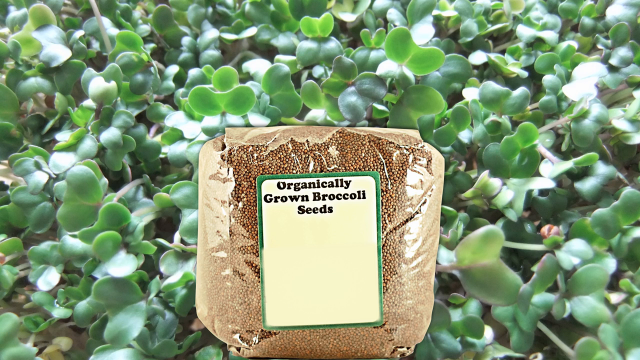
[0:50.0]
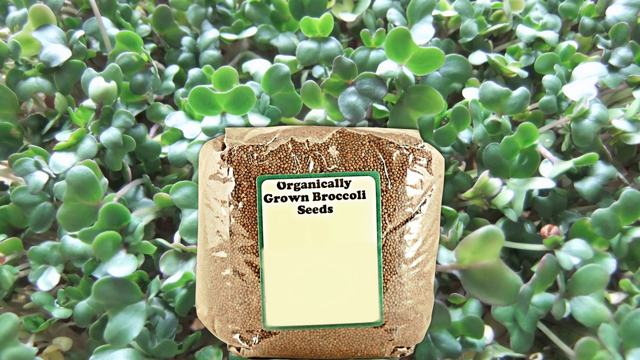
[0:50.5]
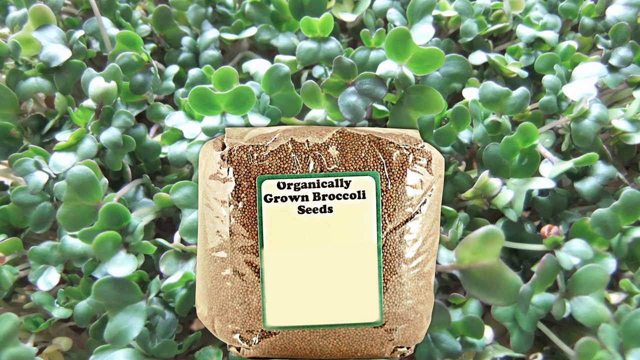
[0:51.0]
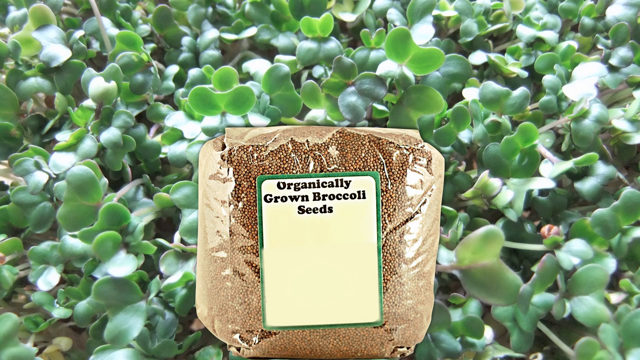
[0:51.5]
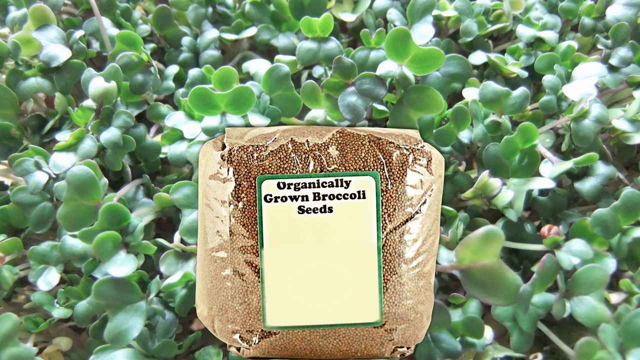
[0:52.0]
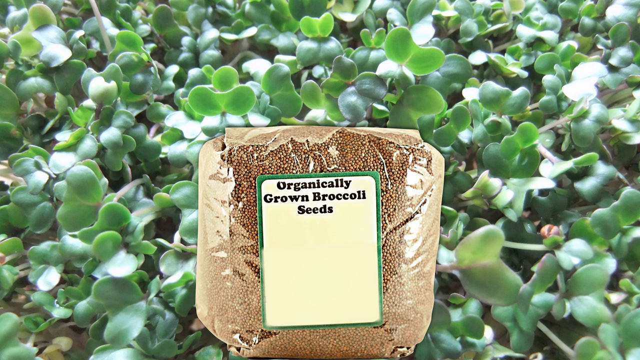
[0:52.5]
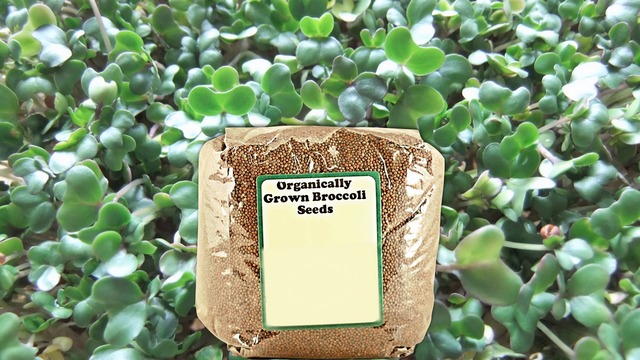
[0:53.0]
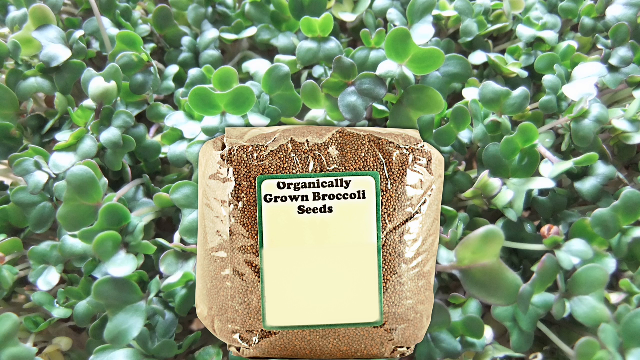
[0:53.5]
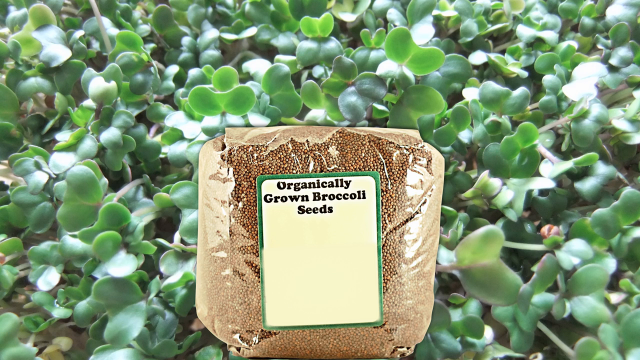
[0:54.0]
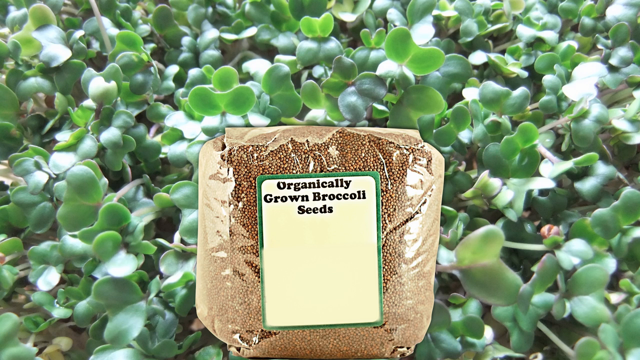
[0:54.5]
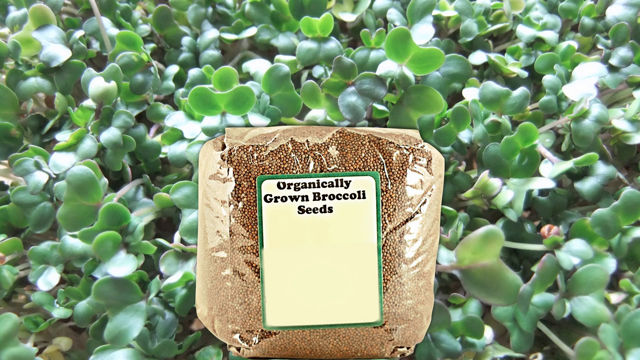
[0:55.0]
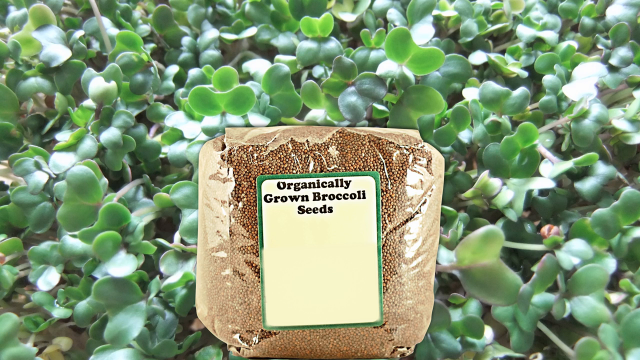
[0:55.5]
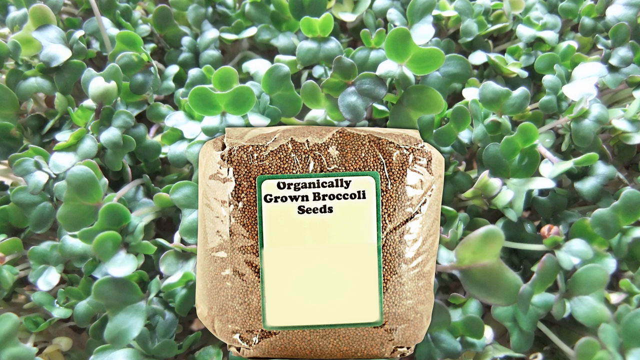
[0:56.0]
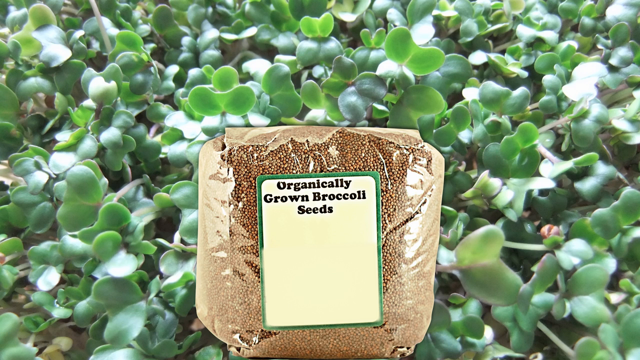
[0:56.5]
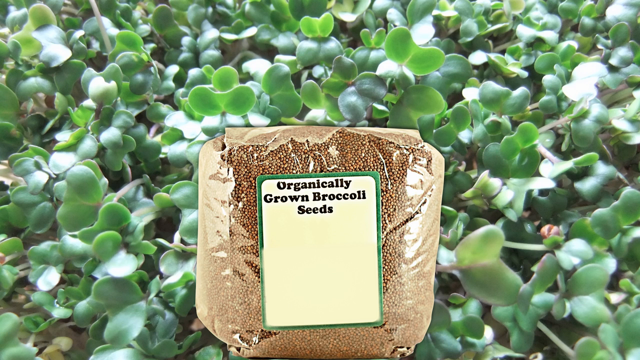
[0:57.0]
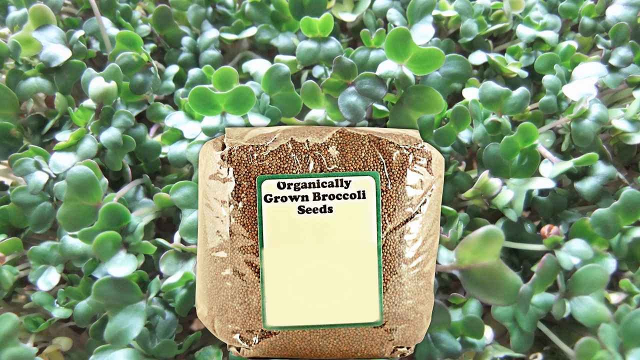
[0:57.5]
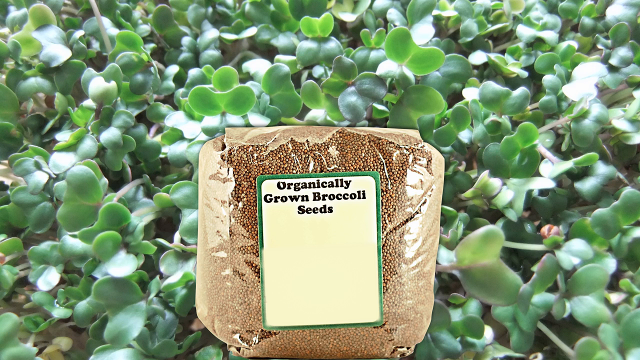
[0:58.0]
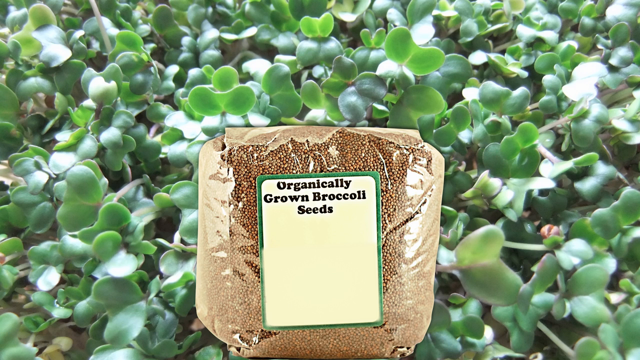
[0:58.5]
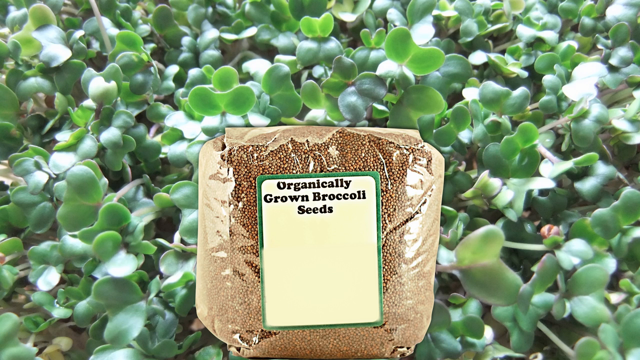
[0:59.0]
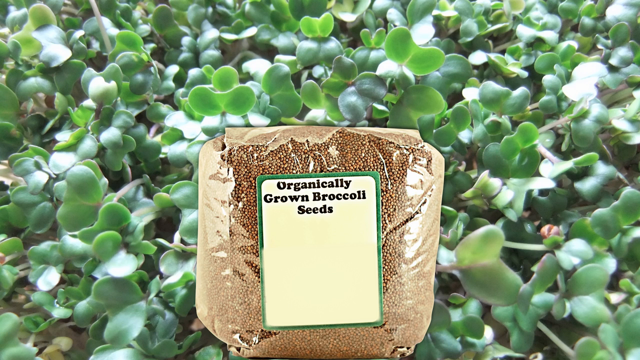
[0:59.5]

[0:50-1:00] The bag of brown seeds is in transparent plastic with a sticker in the centre that has a green frame and reads "organically grown broccoli seeds" in black. The sticker is almost yellow. In the background are plants of the same type, very green and looking well cared for, with sunlight visible on top of the leaves. Little is shown of where the plantation is or how big it is.